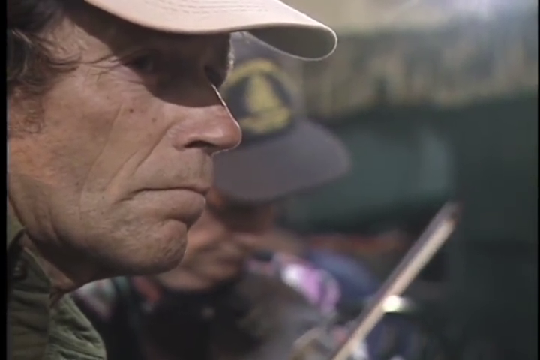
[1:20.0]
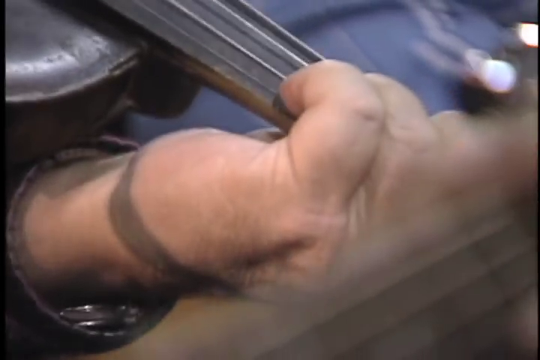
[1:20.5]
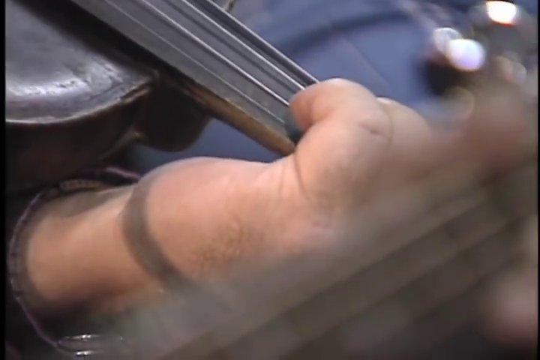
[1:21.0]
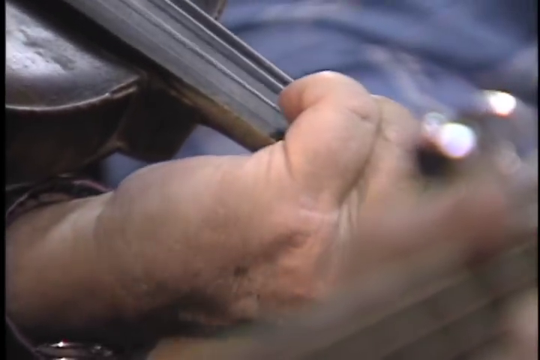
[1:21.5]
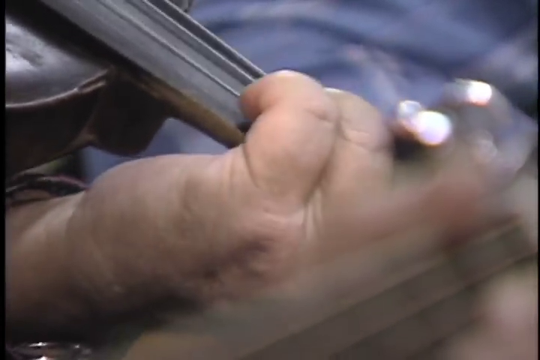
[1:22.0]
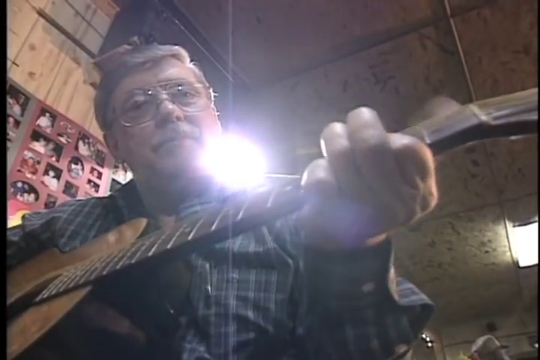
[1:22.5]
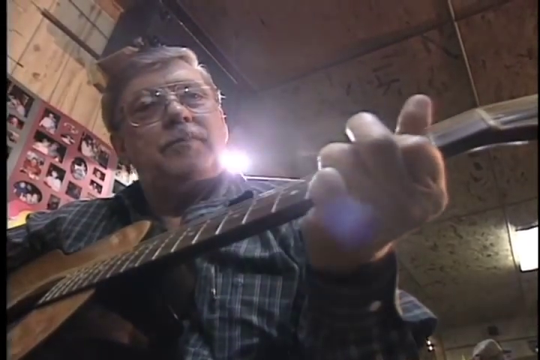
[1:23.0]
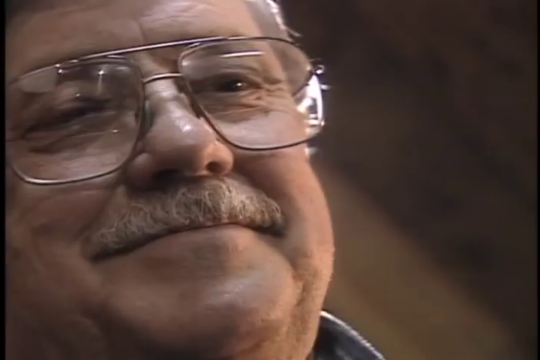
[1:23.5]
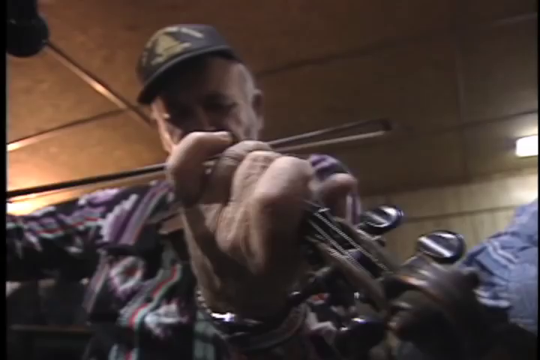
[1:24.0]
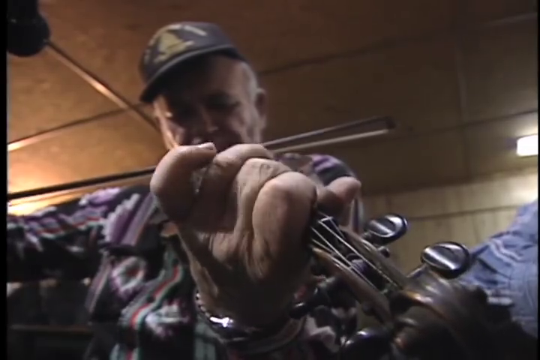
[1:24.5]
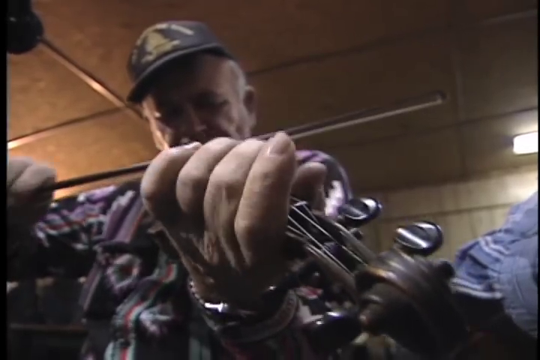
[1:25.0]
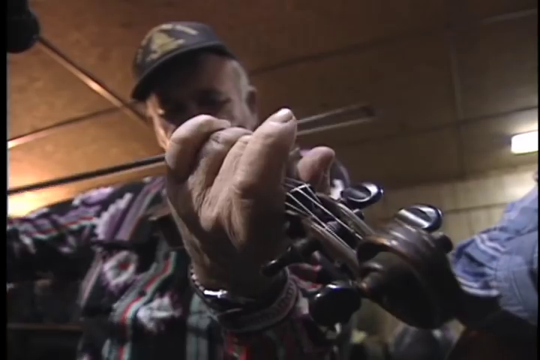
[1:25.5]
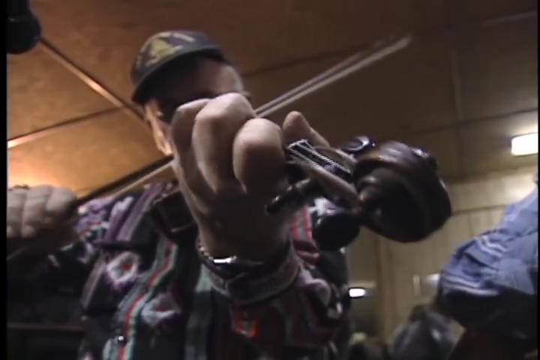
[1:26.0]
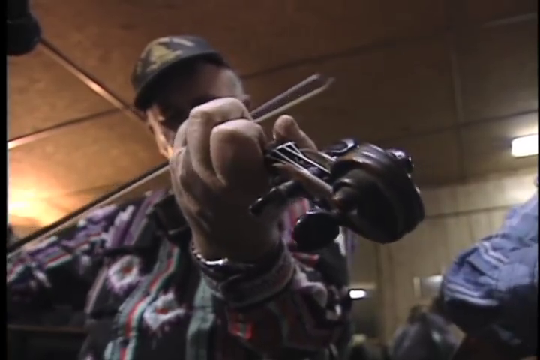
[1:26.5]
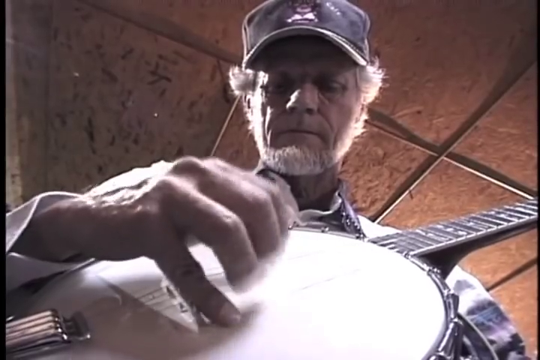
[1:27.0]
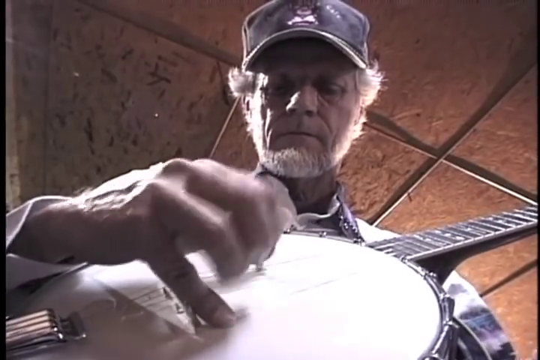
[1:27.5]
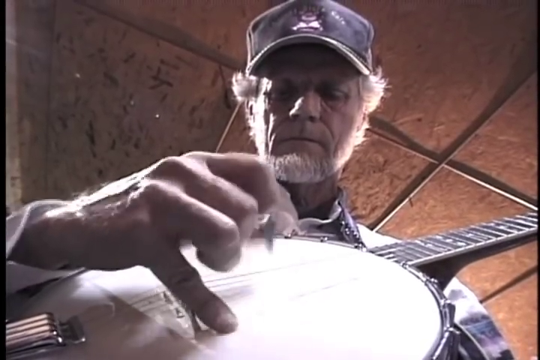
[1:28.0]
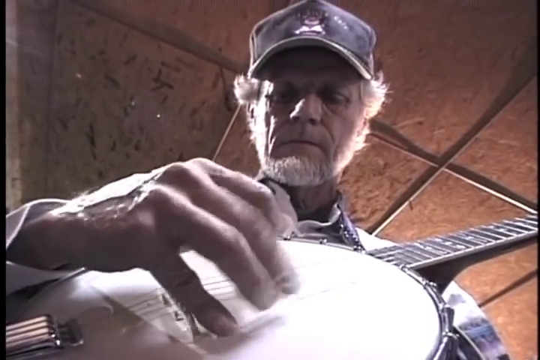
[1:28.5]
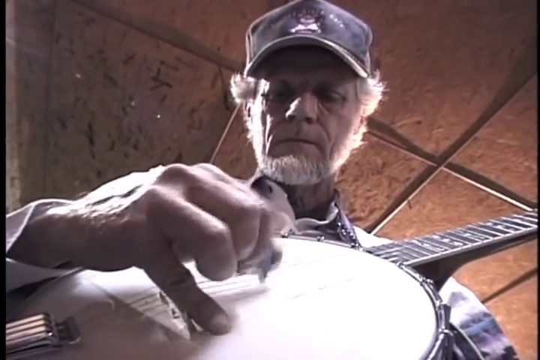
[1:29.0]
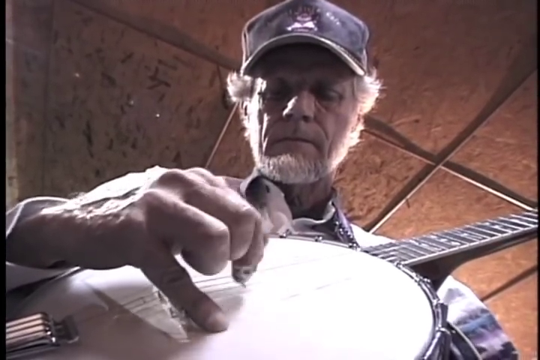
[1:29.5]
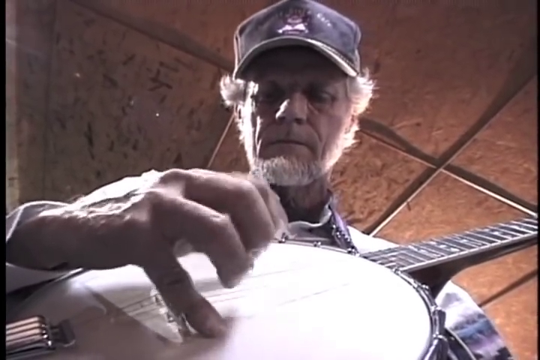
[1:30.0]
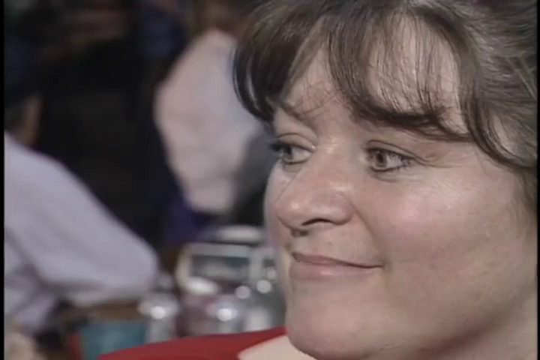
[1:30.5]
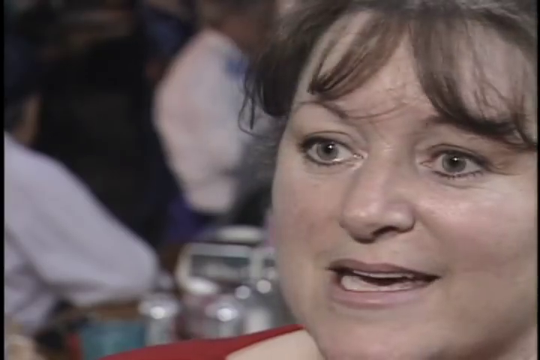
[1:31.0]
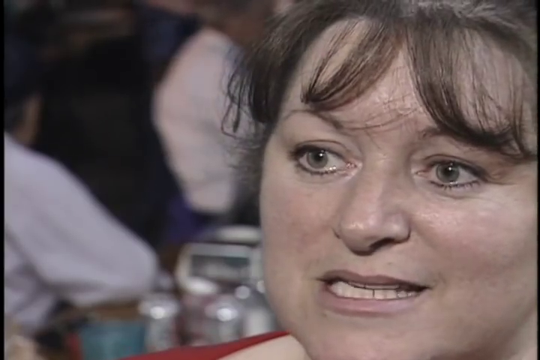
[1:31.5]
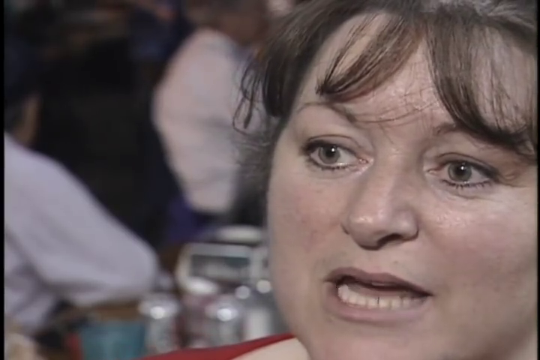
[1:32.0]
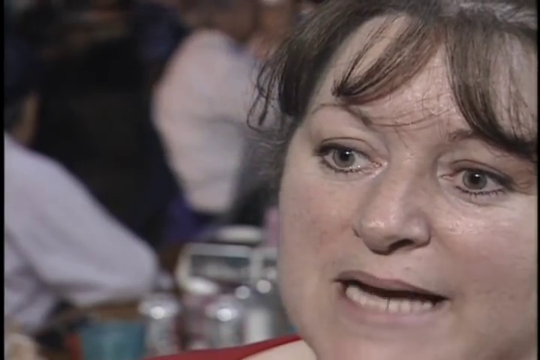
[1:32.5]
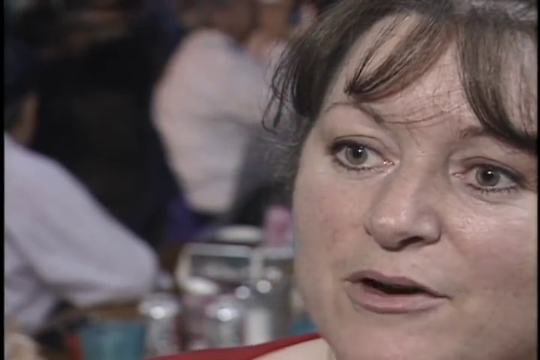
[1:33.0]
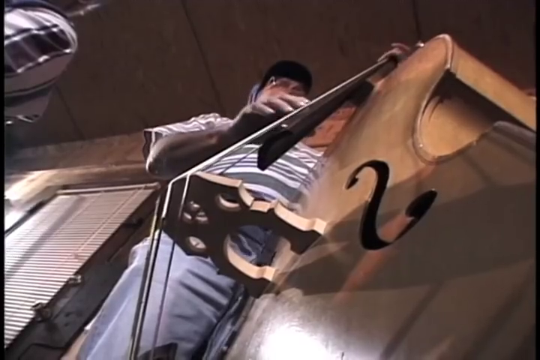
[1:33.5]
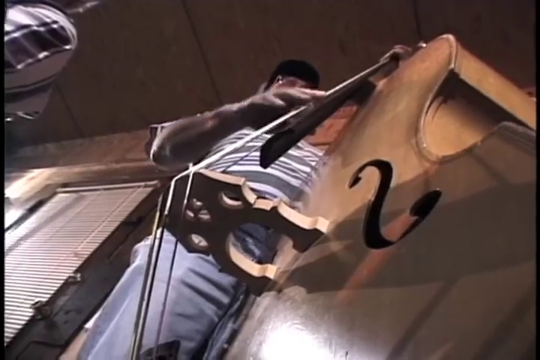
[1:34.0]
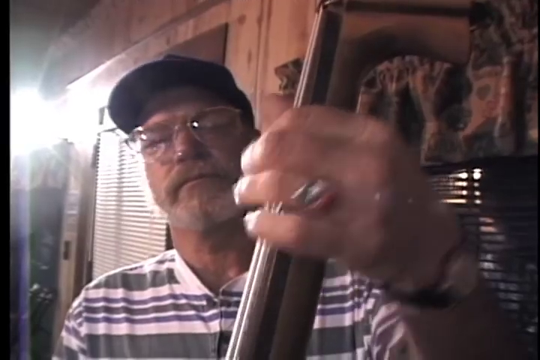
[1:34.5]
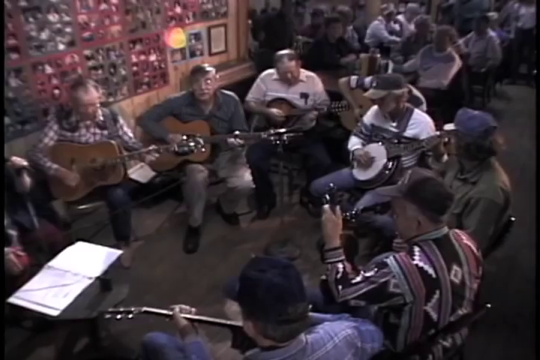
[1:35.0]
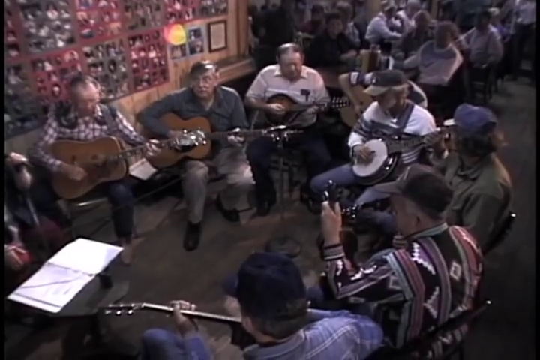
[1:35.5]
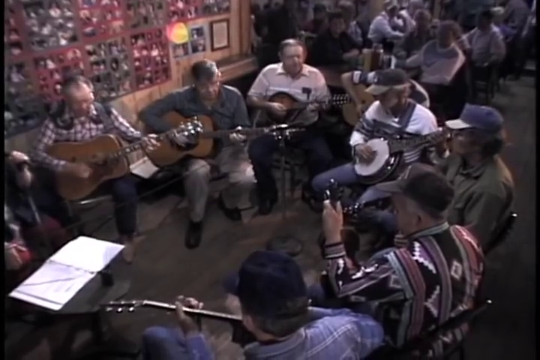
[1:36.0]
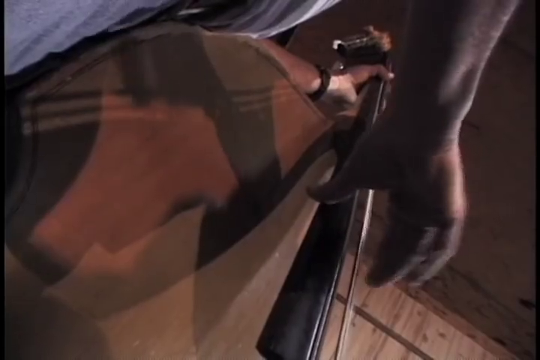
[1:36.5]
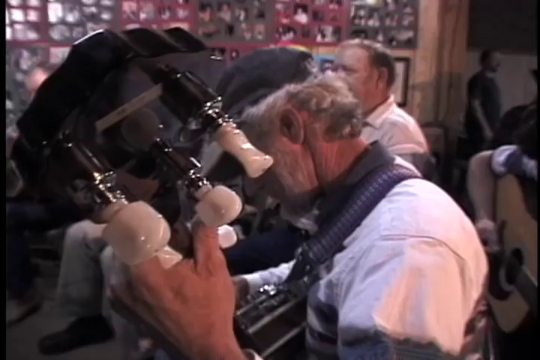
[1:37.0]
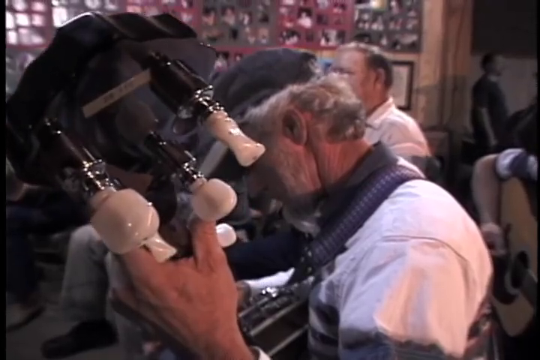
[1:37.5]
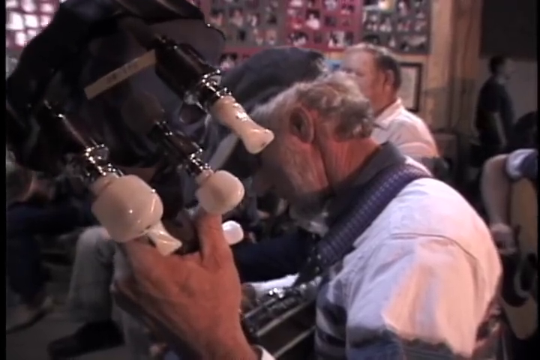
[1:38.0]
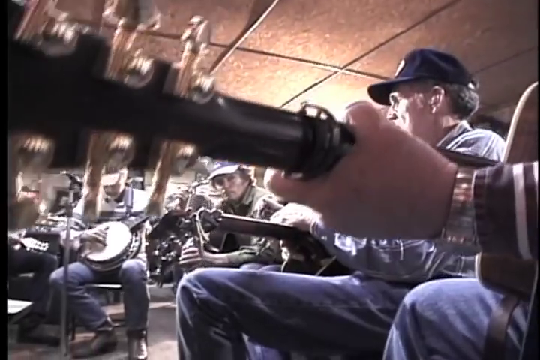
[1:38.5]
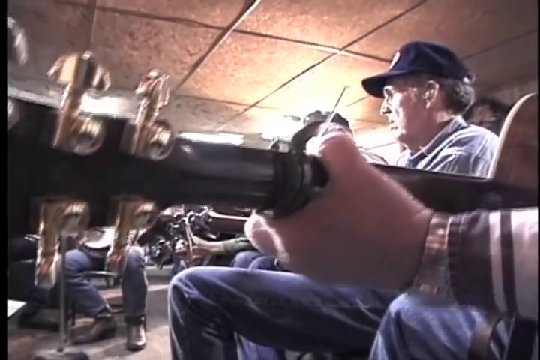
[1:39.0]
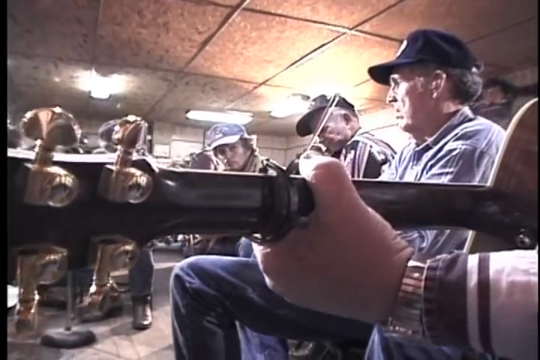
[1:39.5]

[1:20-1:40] A closer shot shows what seems to be the man from an earlier opening frame; only the colour of his shirt, the right side of his face and the peak of his cap are visible. He is an older man, maybe in his 60s. The shot moves swiftly to just the edge of a violin from the base to the neck, with the musician's hand below it playing. Next is a fairly close-up image of a man on the left-hand side; past him, over his right shoulder, more photos are visible on the walls. He wears a green and white checked shirt, and a guitar appears from the bottom left corner. The neck of the guitar is close enough to see the frets, with his left hand's thumb just above the fret bar and the fingers curved below it. Different shots follow of individuals playing, moving their fingers as they do so.